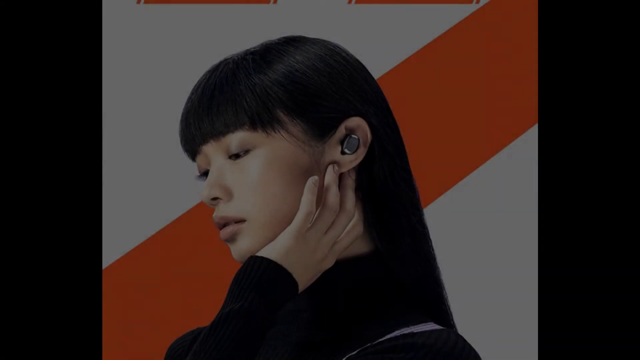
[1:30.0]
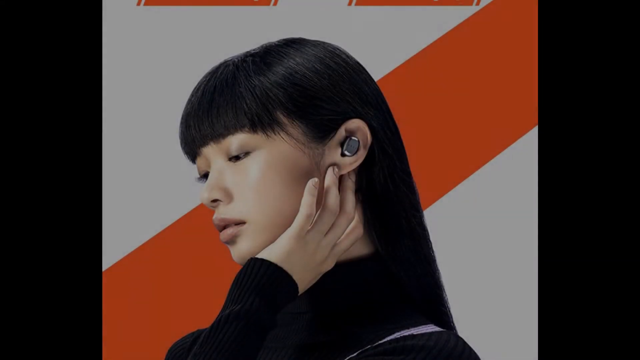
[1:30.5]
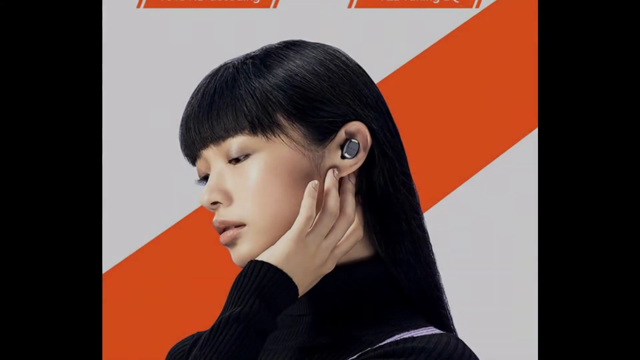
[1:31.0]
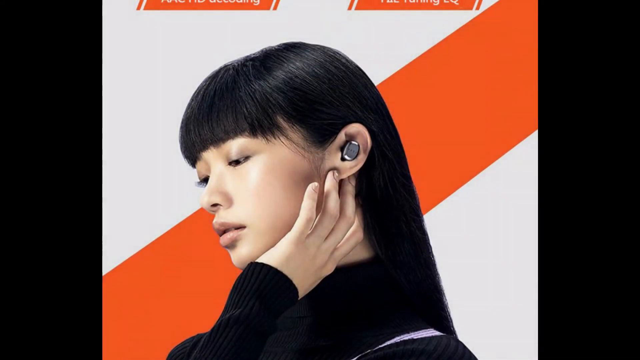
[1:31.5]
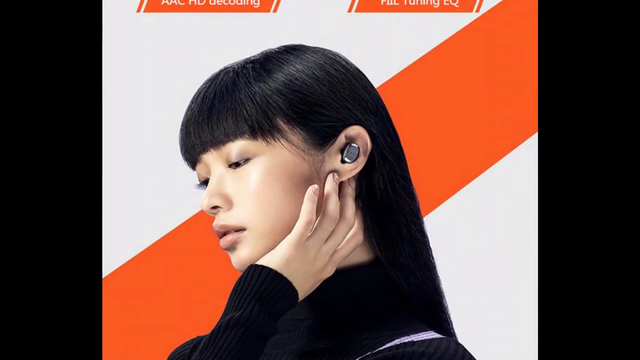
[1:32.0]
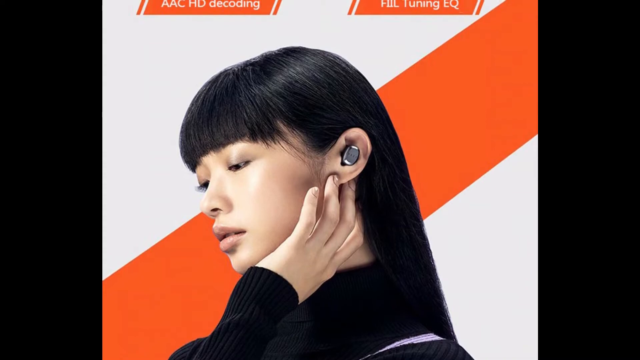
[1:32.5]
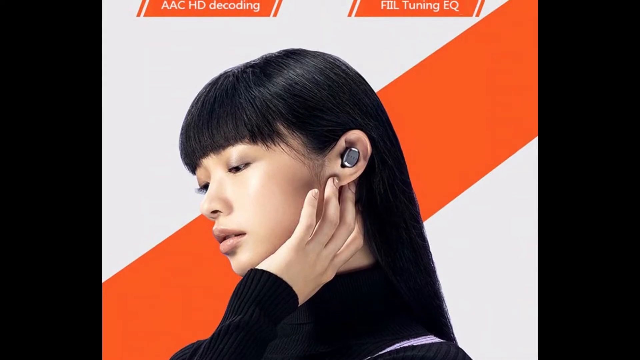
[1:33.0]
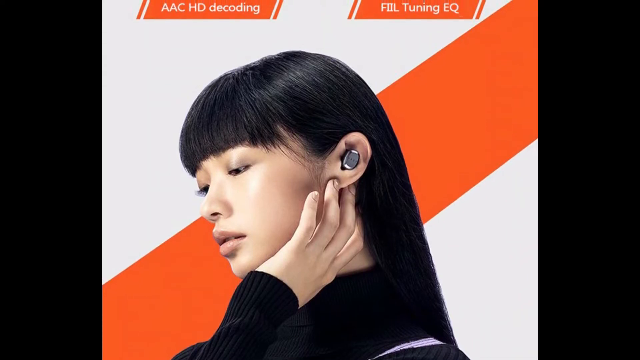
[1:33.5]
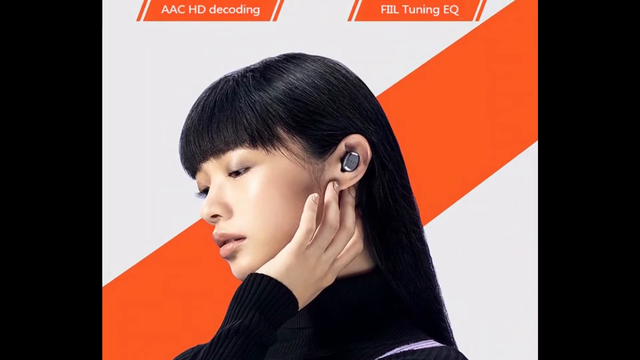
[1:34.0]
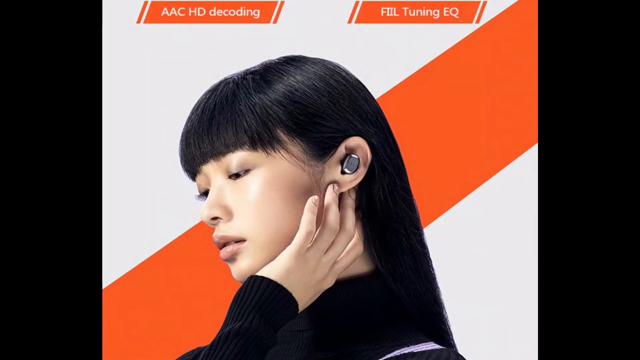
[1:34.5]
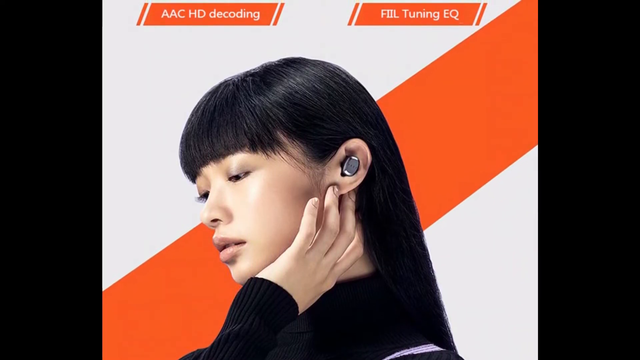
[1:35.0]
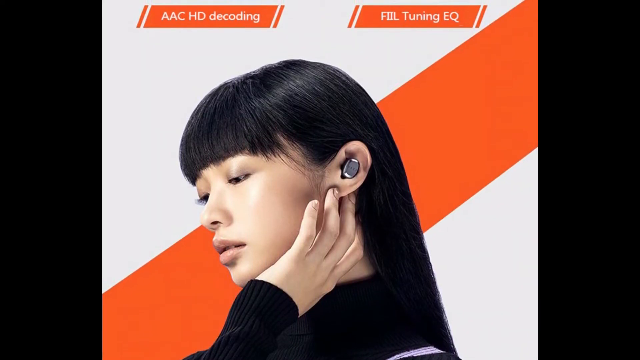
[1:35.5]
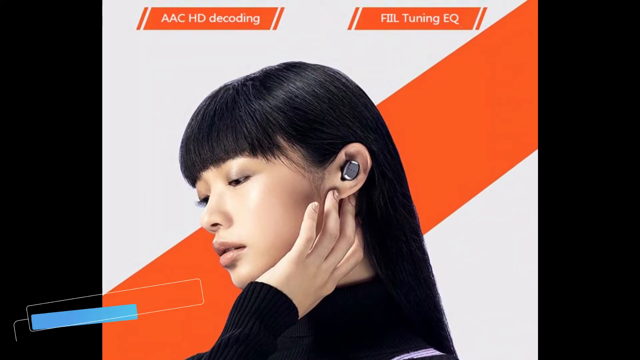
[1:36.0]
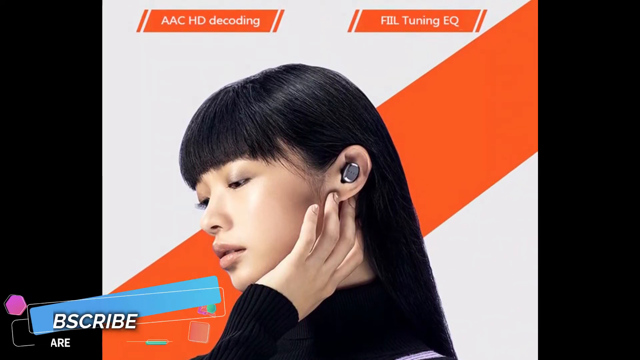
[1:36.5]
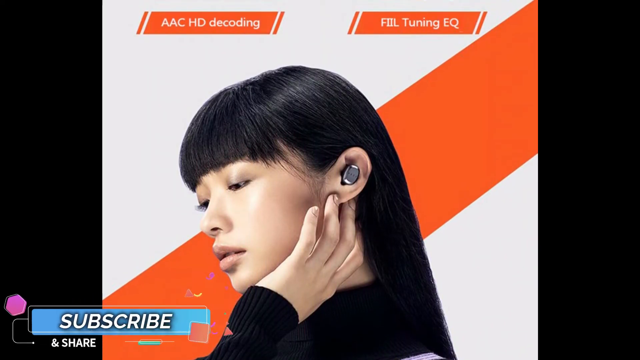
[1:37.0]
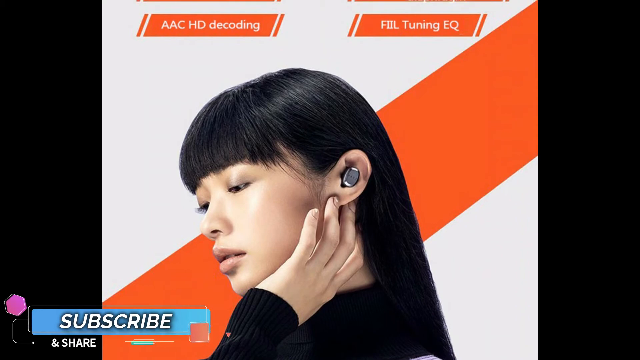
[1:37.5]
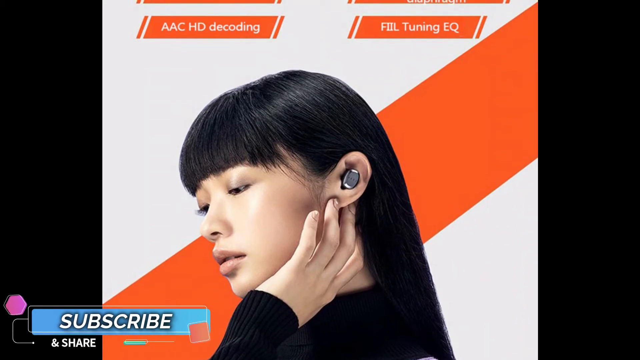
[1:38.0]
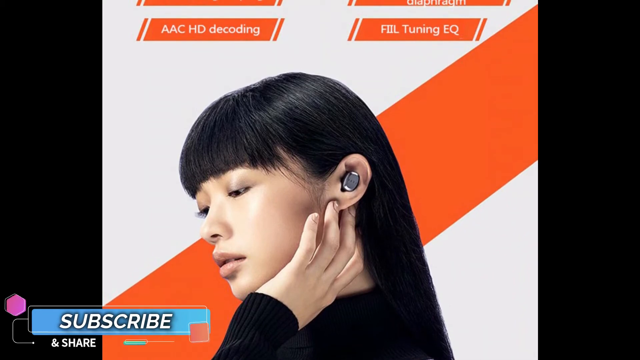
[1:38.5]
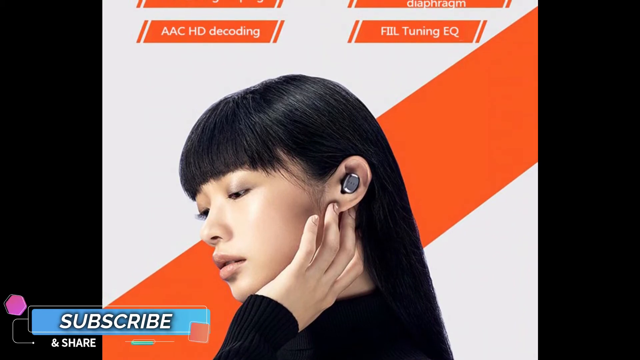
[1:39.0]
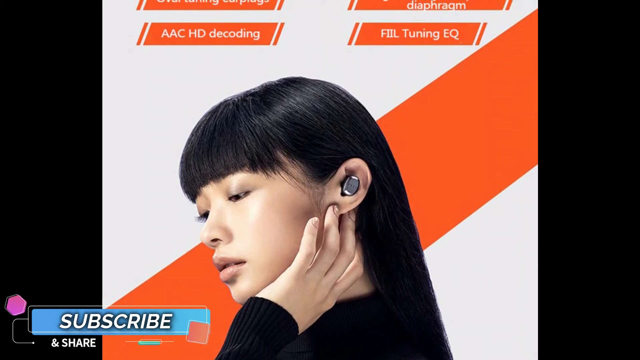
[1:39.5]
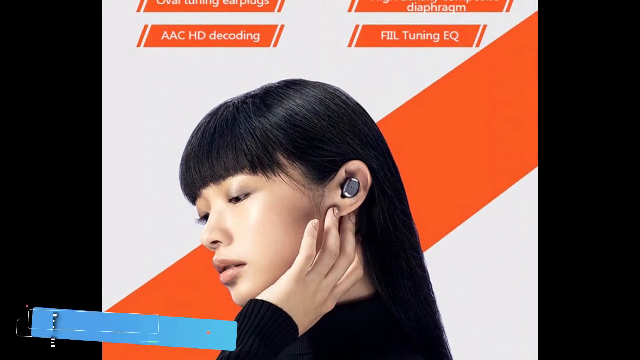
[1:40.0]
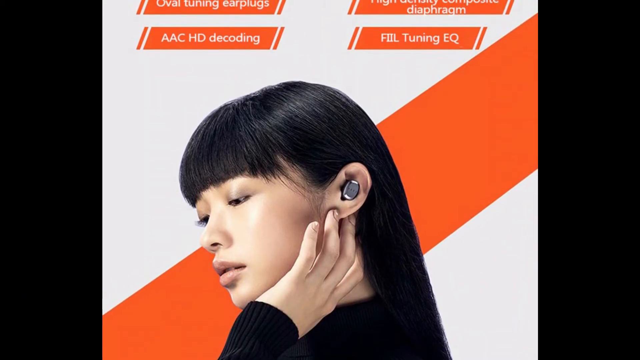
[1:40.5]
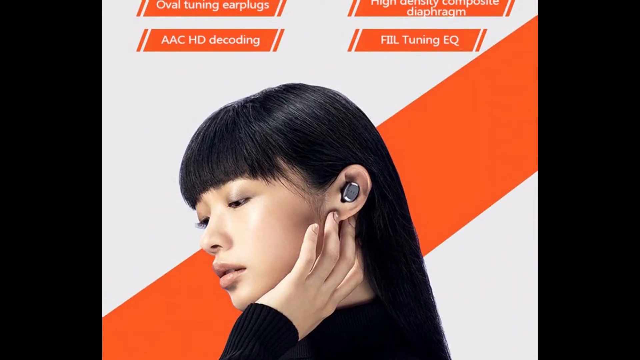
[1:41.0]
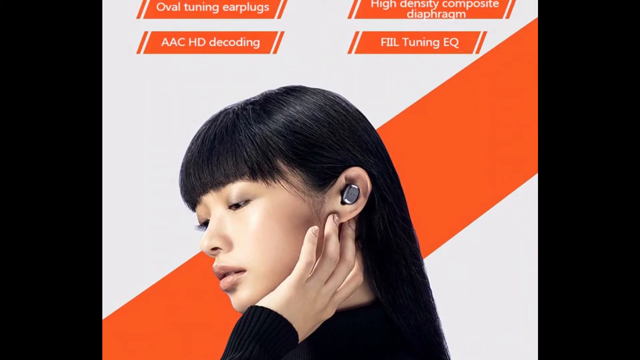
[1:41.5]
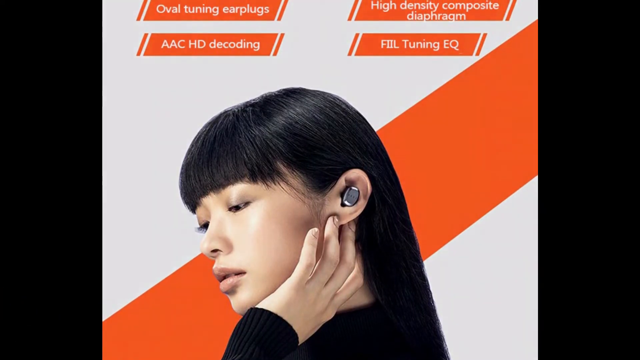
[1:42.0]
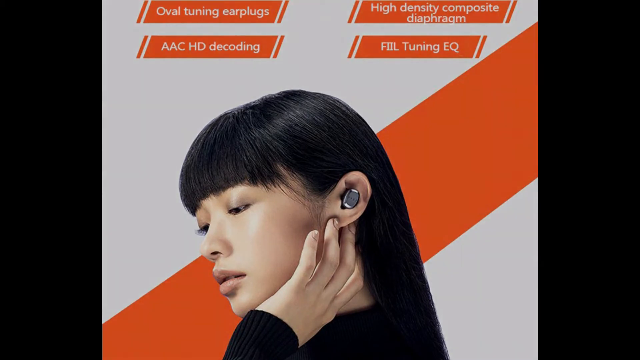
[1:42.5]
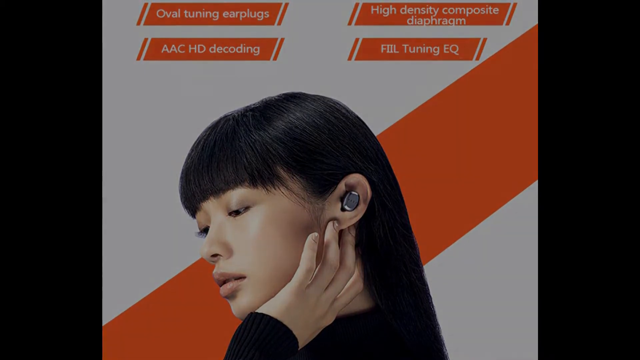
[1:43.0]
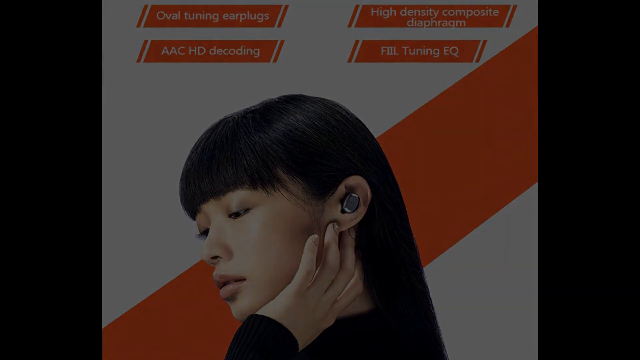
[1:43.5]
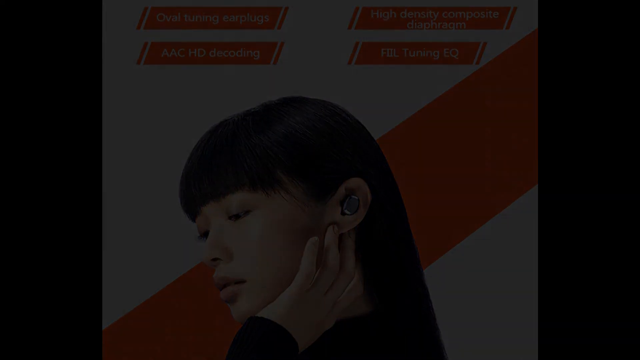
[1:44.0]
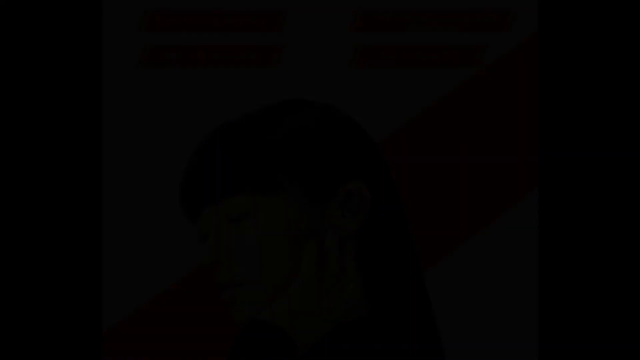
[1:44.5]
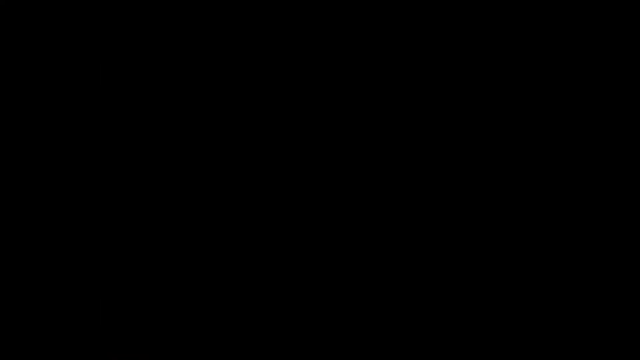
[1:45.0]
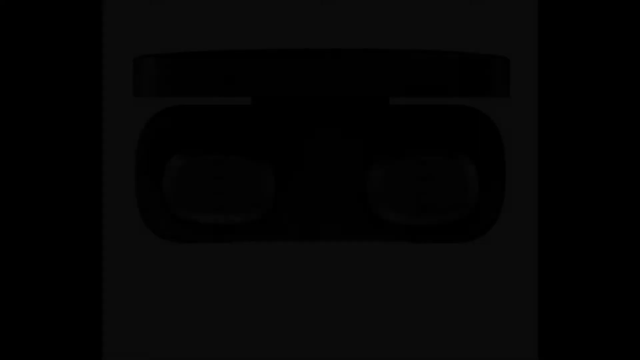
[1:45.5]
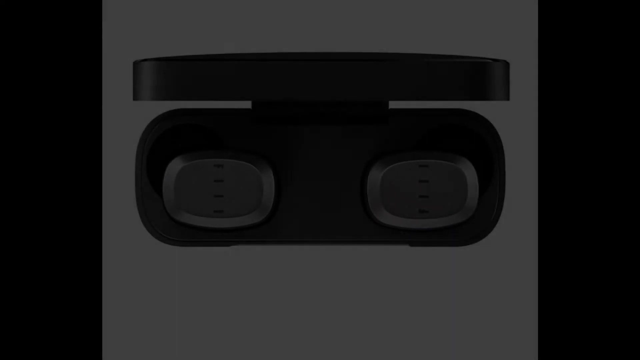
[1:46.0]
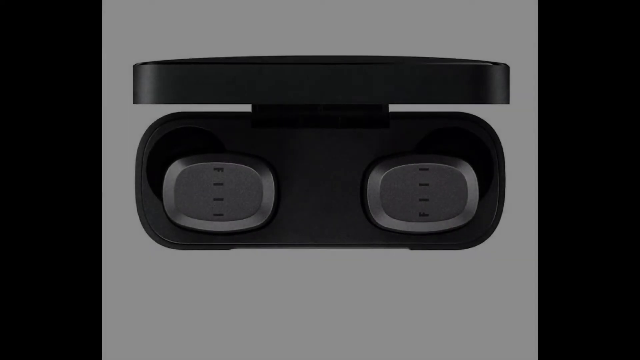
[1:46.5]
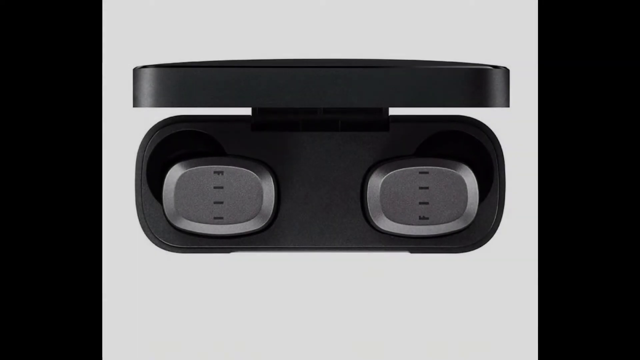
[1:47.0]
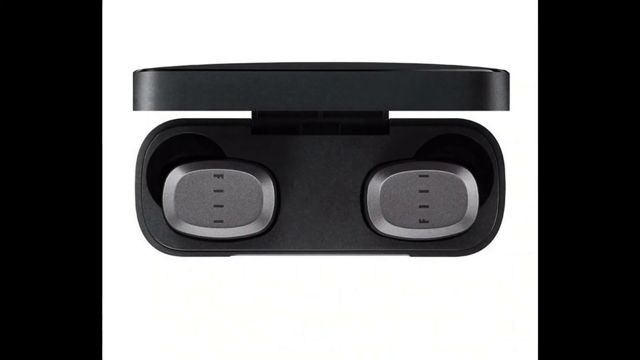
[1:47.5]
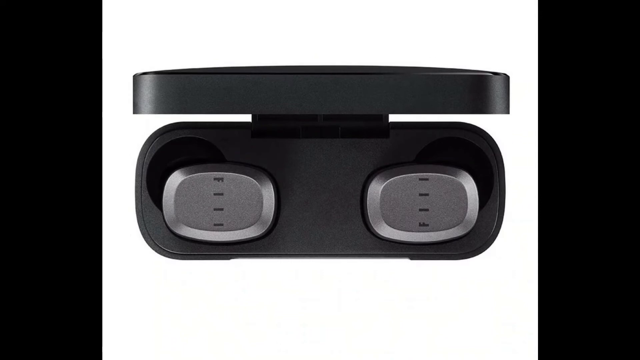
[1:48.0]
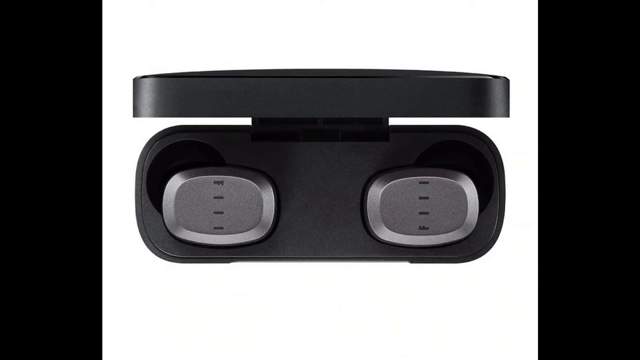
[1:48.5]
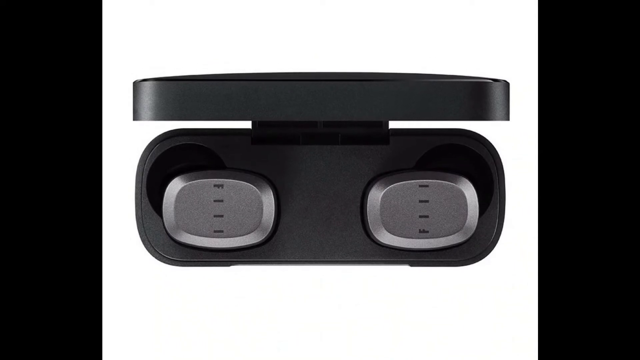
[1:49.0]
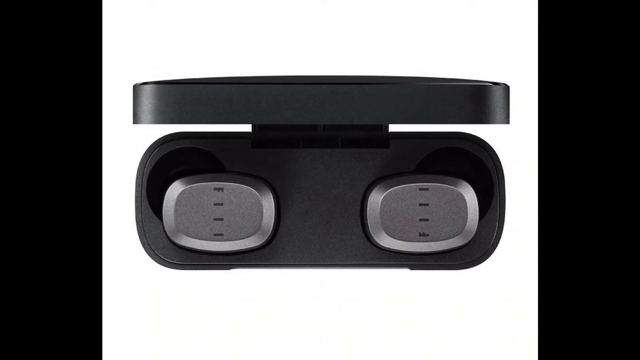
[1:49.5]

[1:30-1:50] The earbud advert shows a bud in the left ear of an Asian woman in her 20s with long black hair and a fringe, wearing a black roll-neck jumper. The background is white and orange diagonal stripes. She has neatly manicured, short fingernails, lip gloss and very subtle eye makeup. Her hair is behind her ear, giving a clear view of the dark-coloured bud in her left ear, which is prominent and very visible. She has a strap on her shoulder, possibly from a bag hanging out of shot. The text states that the buds have AAC HD decoding and fiil tuning EQ, and that the earplugs have oval tuning and a high density composite diaphragm. On screen, viewers are invited to subscribe and share. Finally, a close-up shows the buds in their open carrying case.